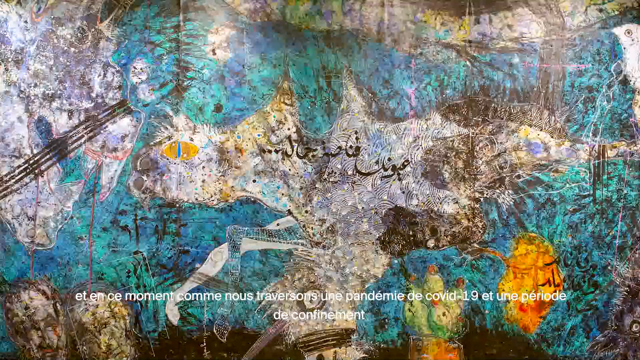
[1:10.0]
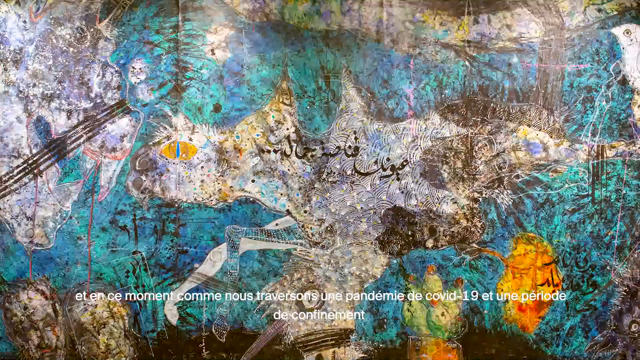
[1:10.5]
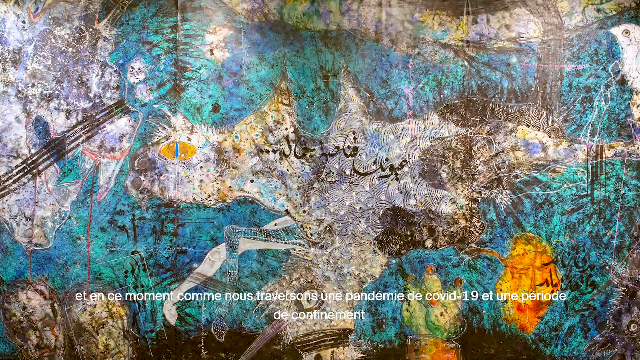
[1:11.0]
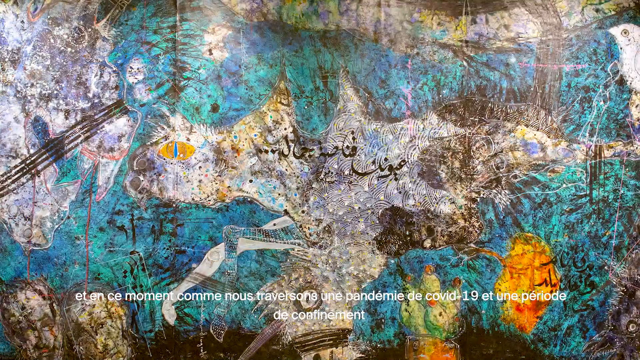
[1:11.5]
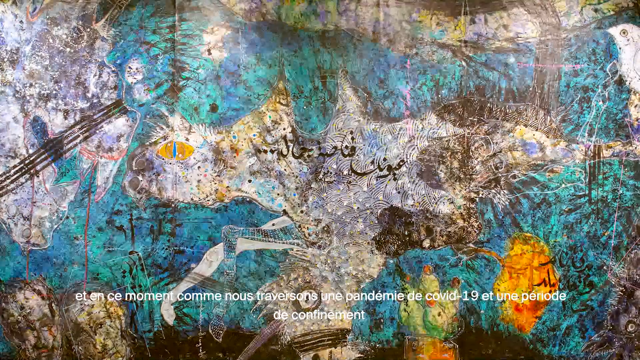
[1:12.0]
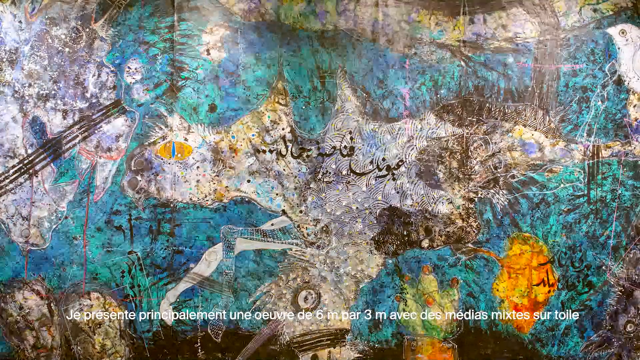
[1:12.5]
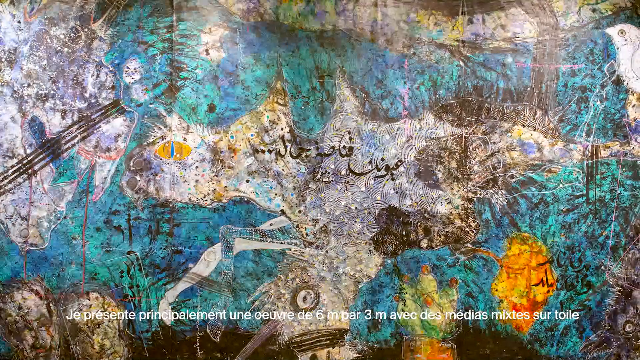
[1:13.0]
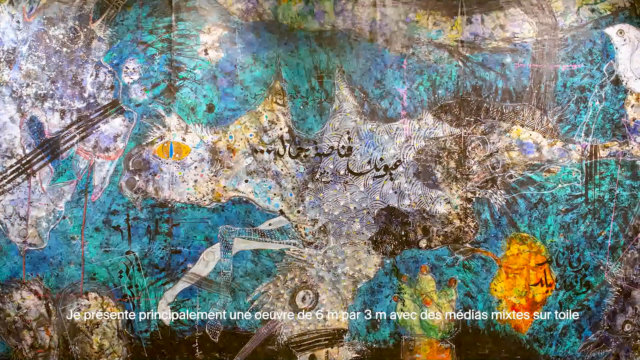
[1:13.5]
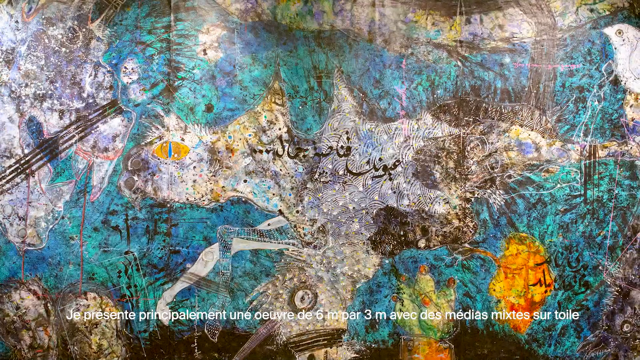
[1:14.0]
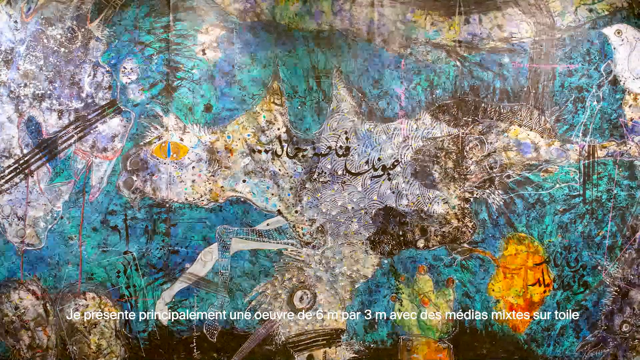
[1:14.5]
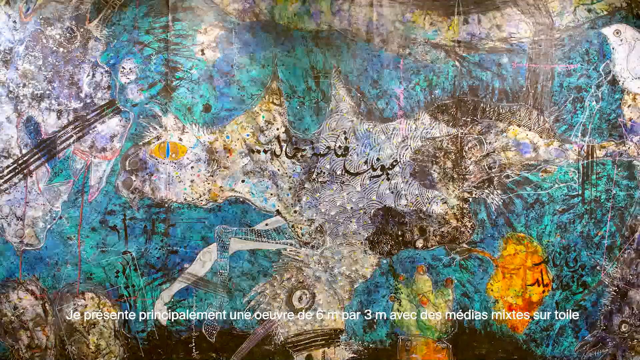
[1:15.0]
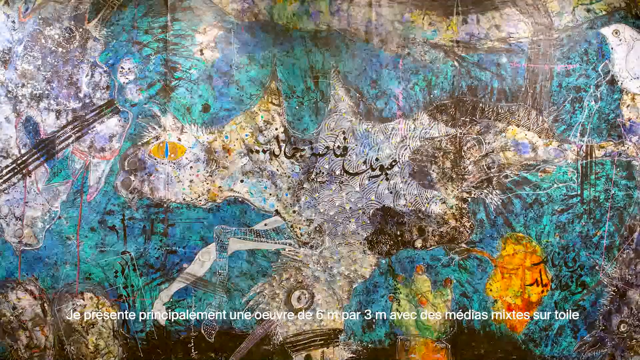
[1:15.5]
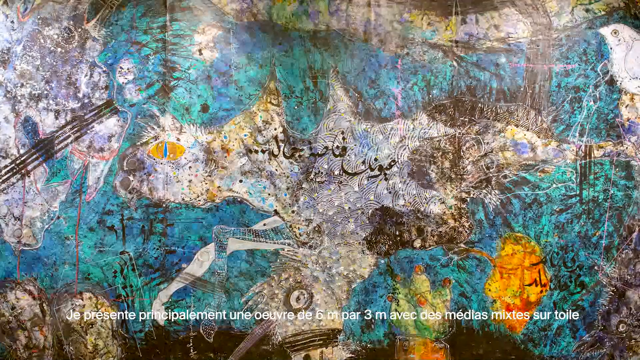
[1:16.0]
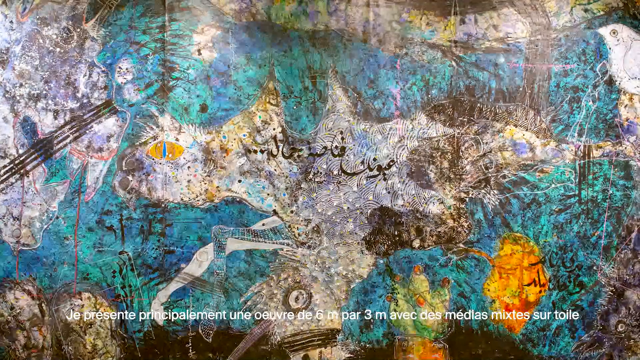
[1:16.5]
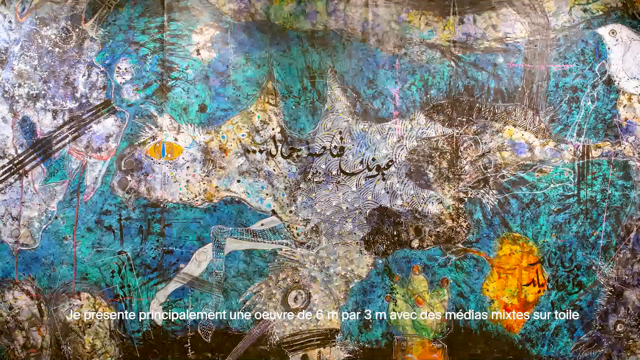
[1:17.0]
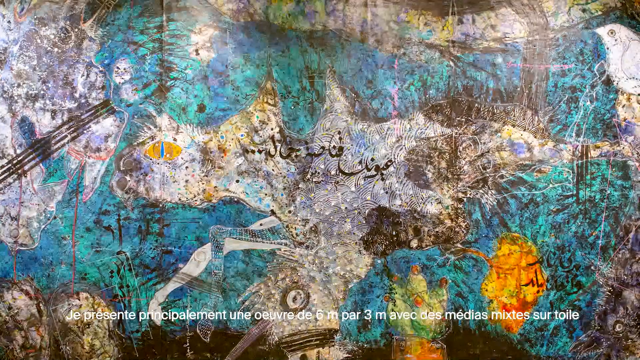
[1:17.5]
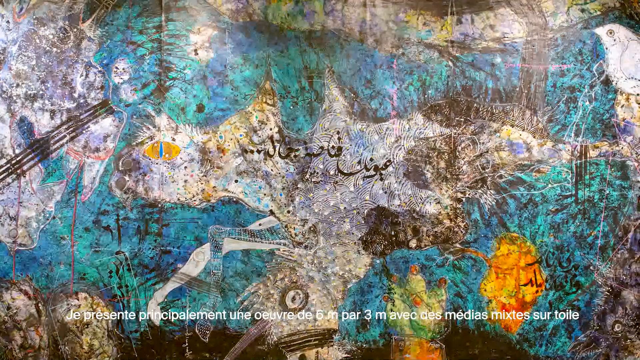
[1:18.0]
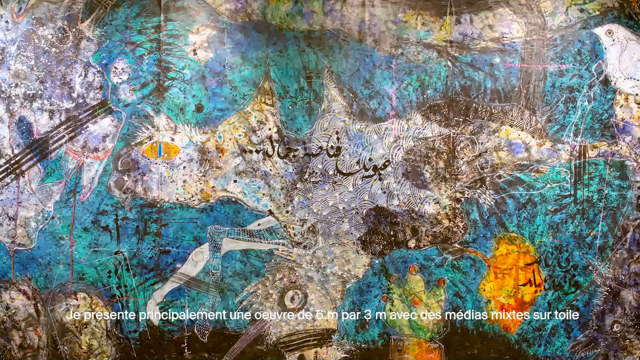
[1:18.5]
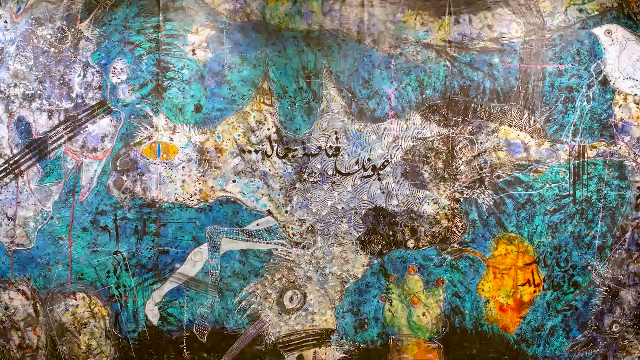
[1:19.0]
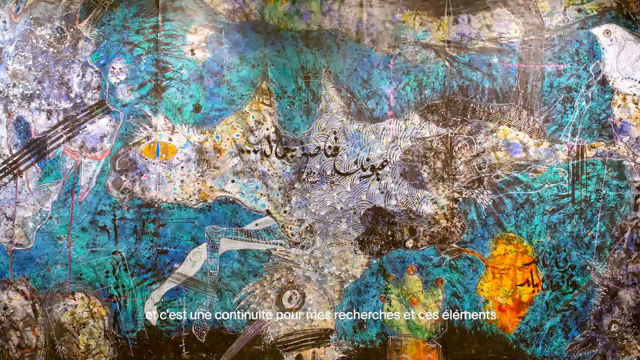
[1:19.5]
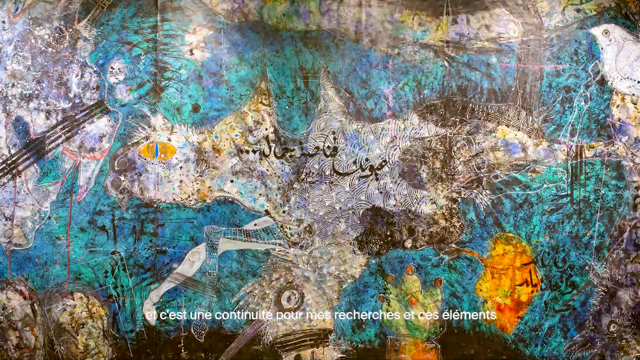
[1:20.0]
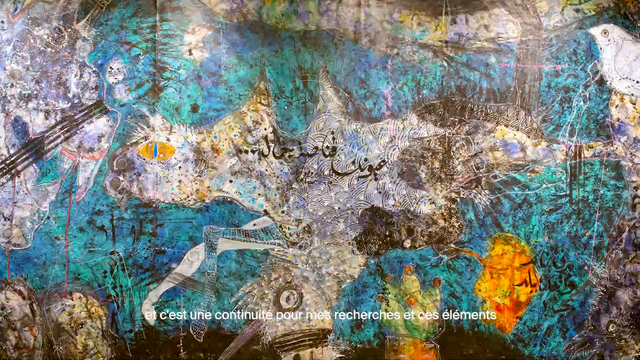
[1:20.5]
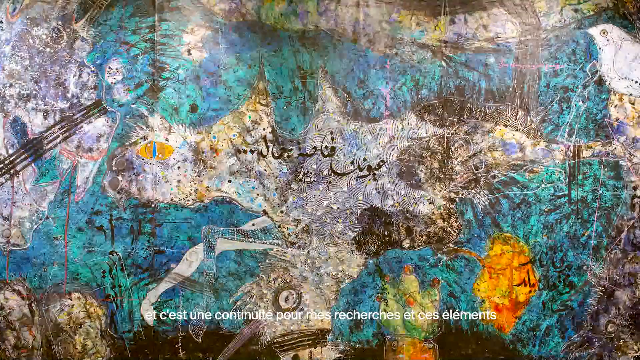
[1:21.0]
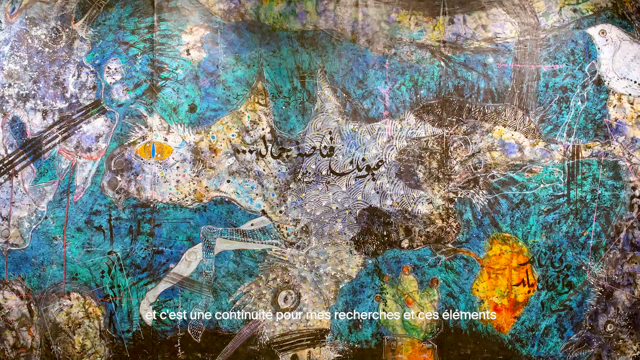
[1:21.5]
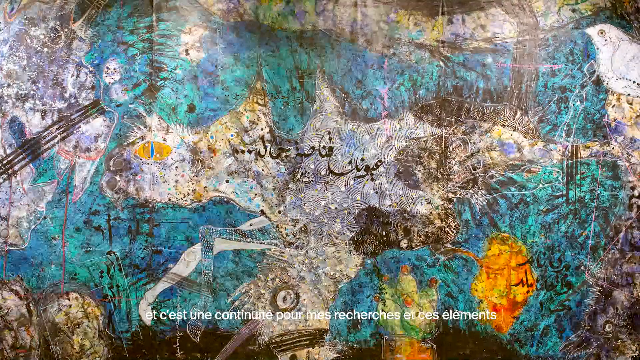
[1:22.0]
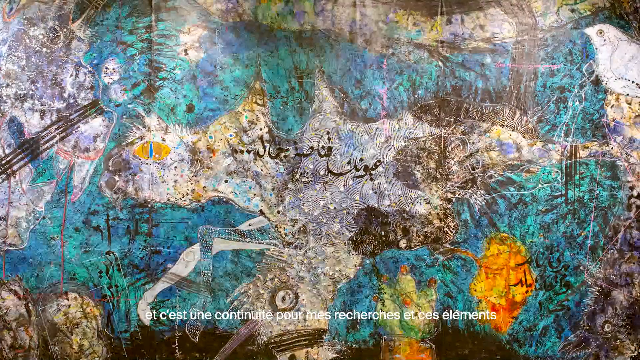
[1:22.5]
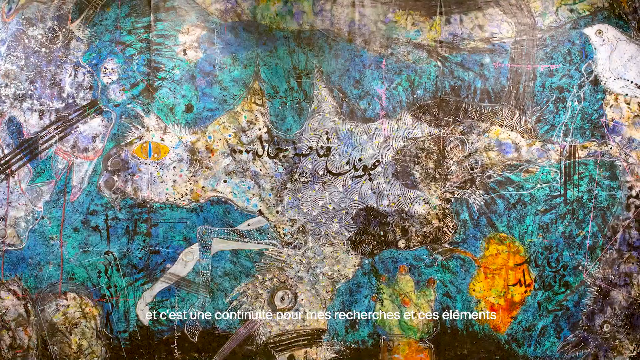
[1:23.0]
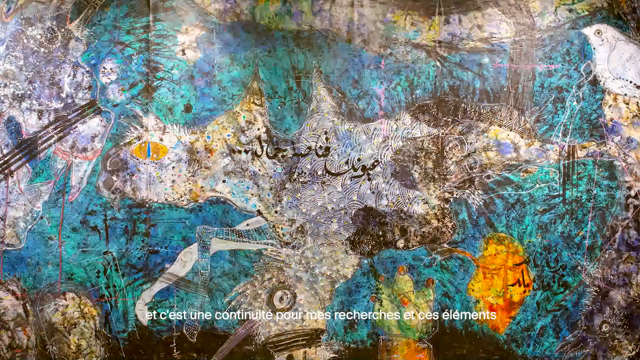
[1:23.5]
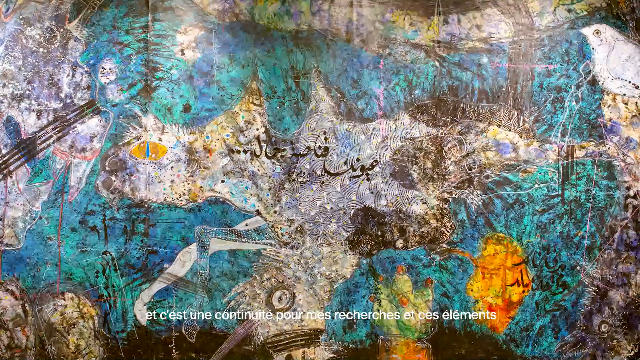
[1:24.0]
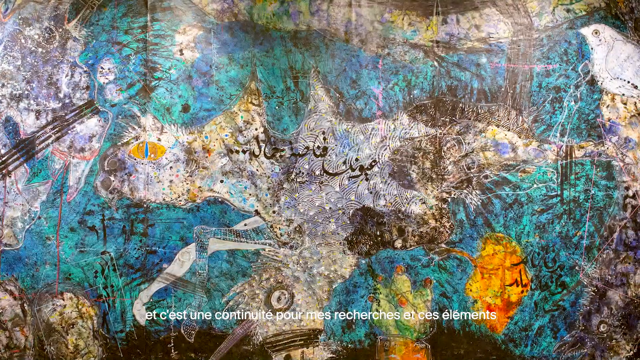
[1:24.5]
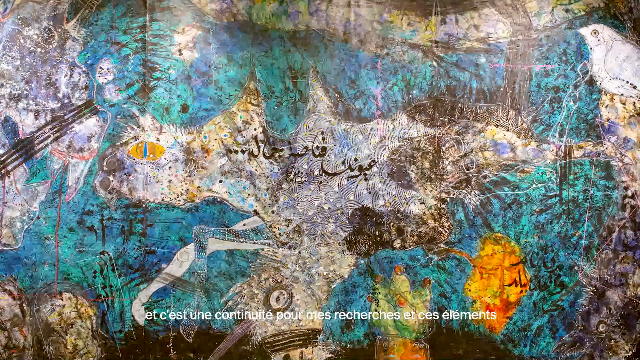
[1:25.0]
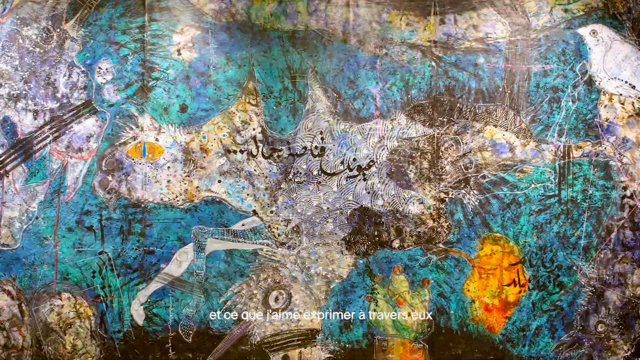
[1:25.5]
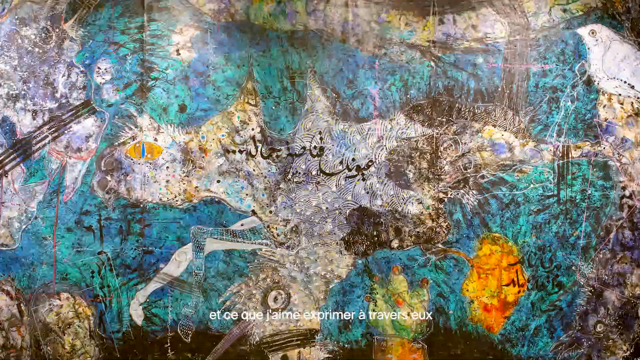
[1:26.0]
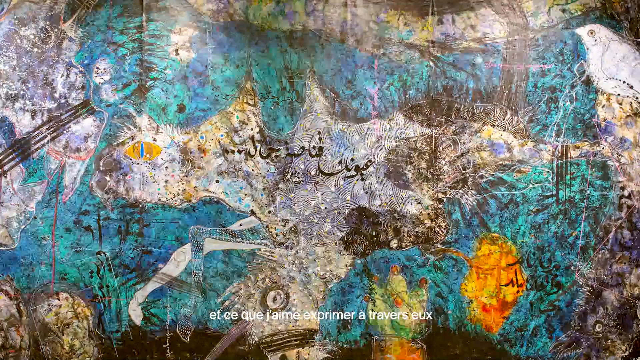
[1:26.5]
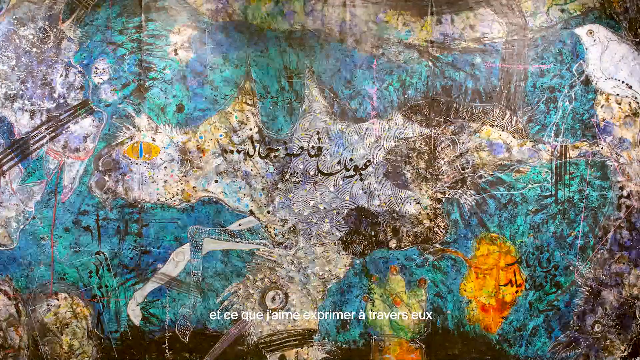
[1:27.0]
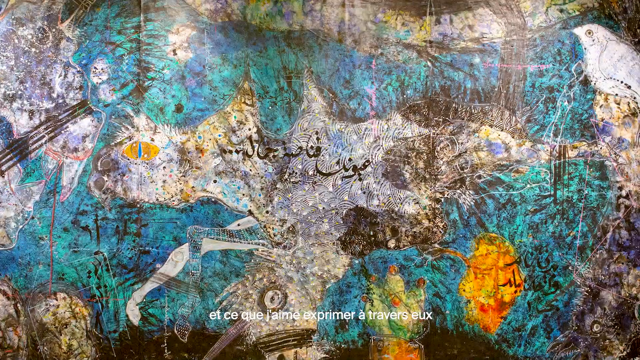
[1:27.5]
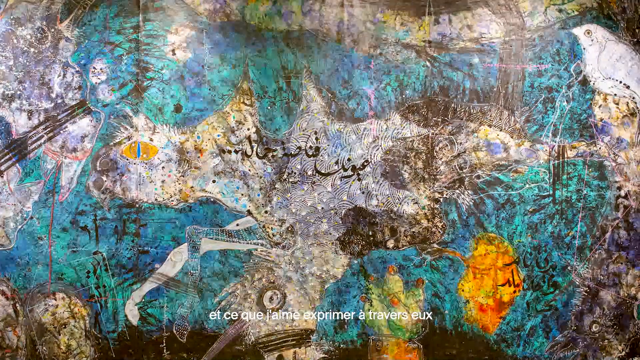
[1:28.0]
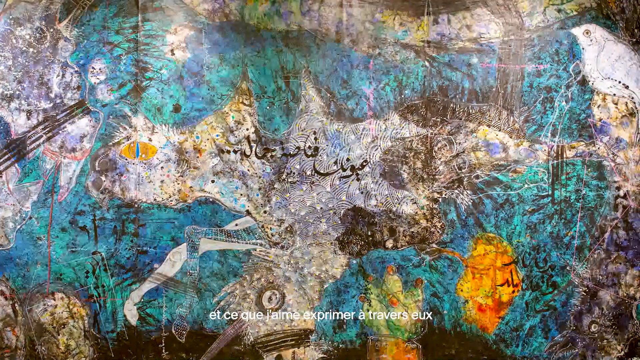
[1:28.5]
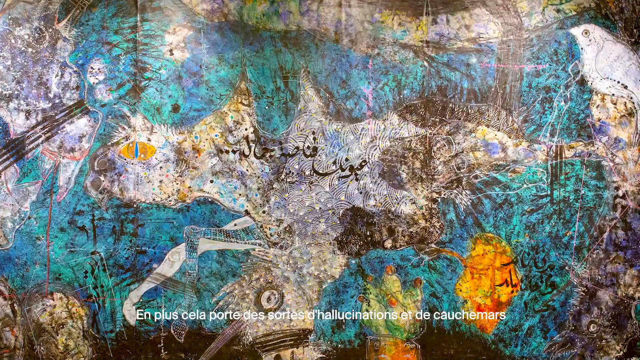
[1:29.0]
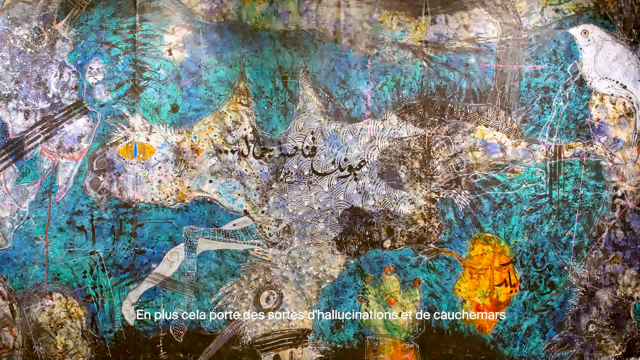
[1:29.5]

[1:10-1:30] An image that looks like a painting is shown, with visible brushstrokes, especially in the middle. The camera focuses on the center of the image, moving ever so slightly to the right and to the left. The image appears to be some sort of creature depicted with elements like a cat eye and a bird look. The animal is primarily a whitish gray, while the background is a blue teal. Subtitles at the bottom are not in English. The setting appears to be a gallery wall or the painting itself, and the video does not change to other scenes.